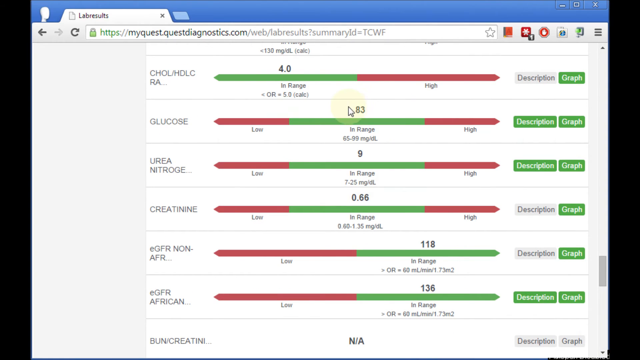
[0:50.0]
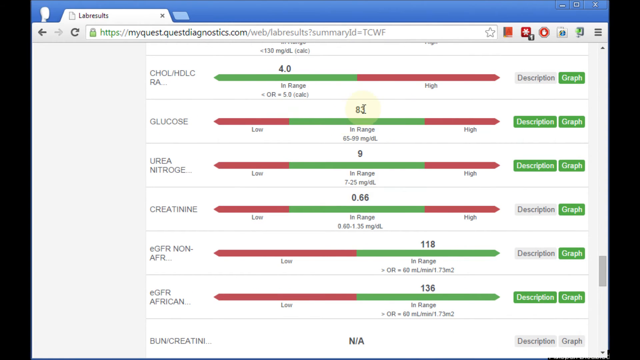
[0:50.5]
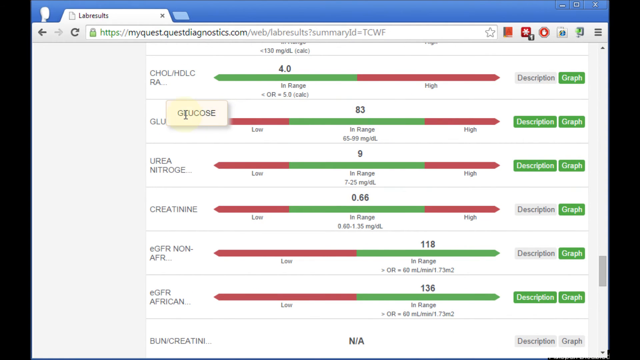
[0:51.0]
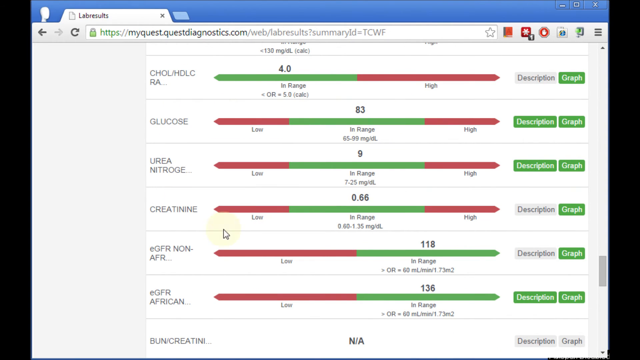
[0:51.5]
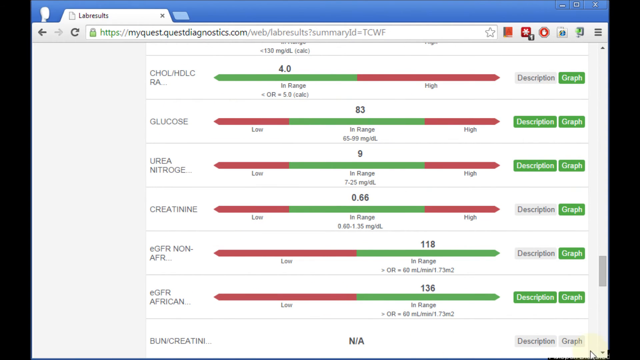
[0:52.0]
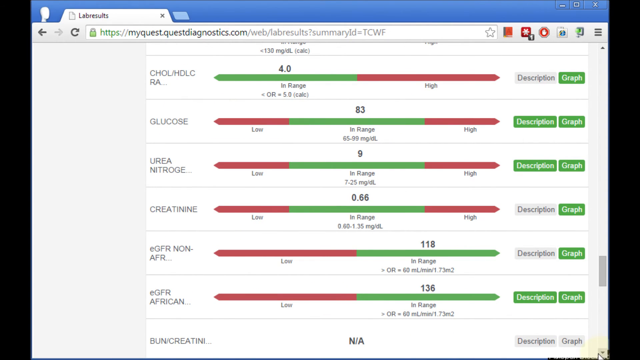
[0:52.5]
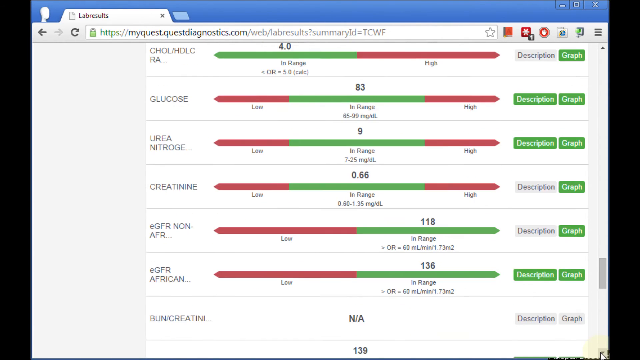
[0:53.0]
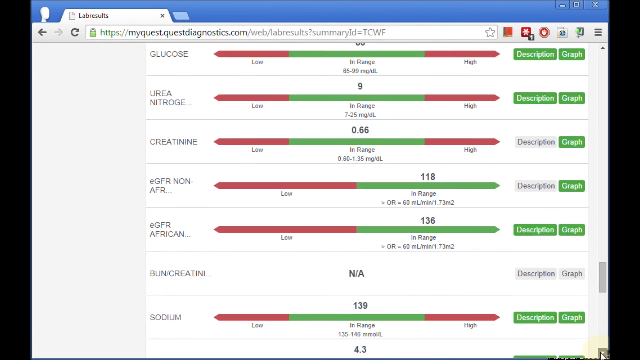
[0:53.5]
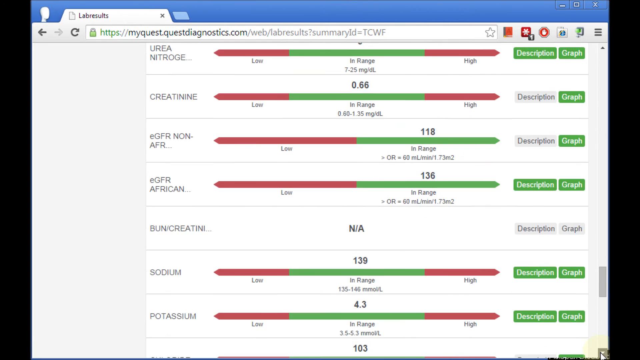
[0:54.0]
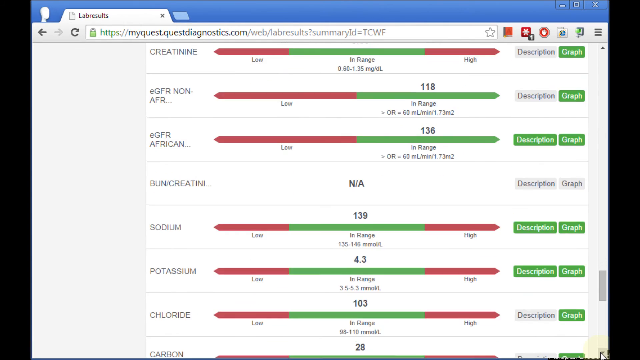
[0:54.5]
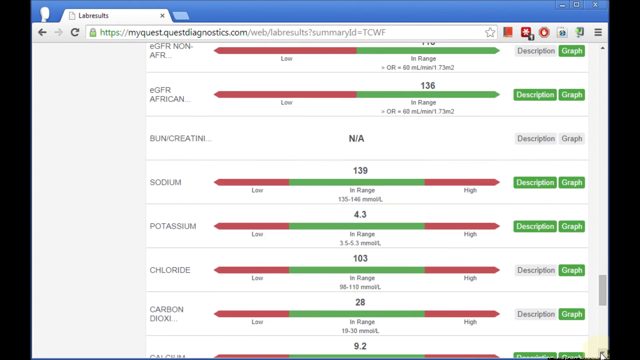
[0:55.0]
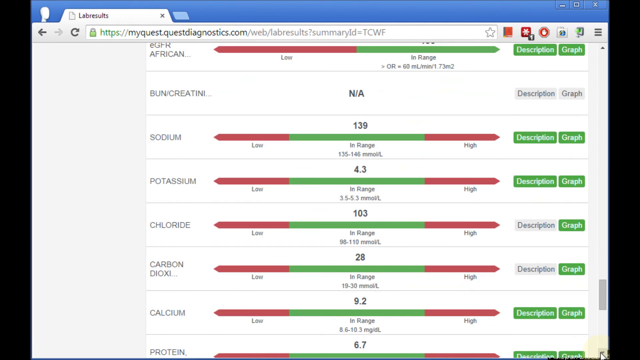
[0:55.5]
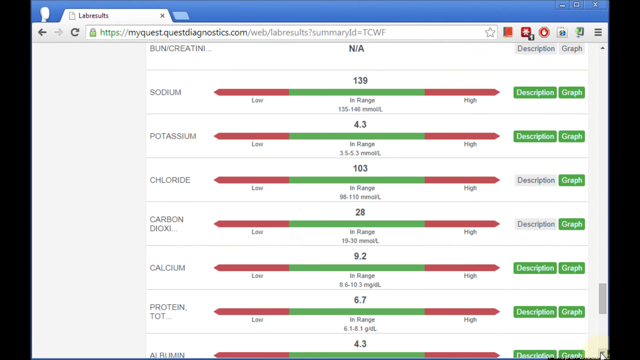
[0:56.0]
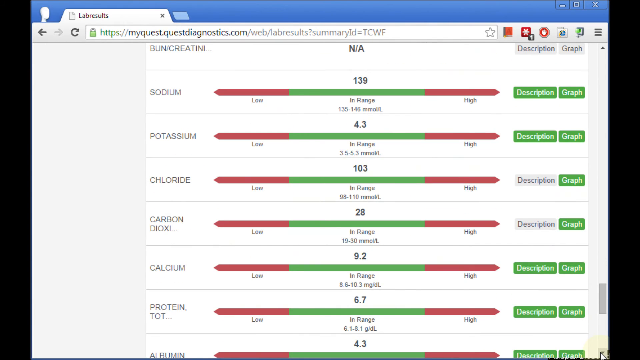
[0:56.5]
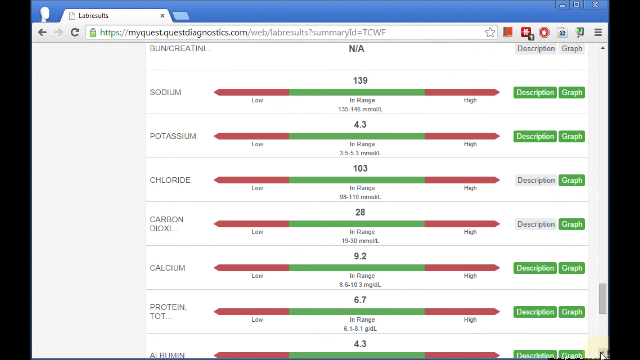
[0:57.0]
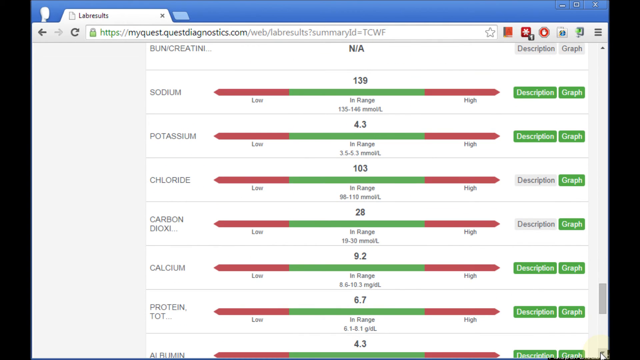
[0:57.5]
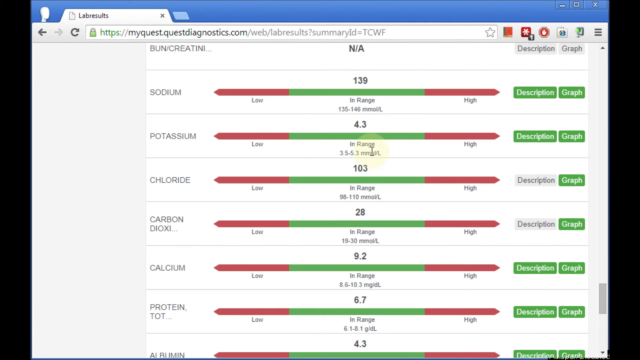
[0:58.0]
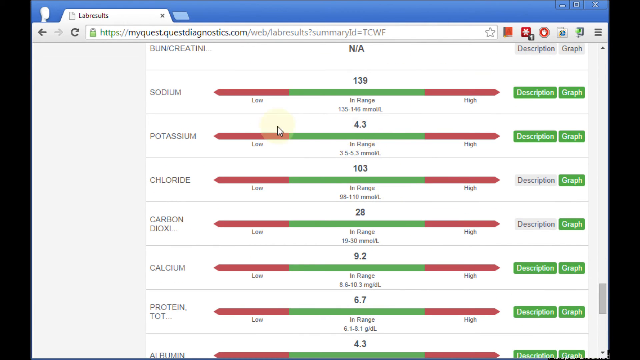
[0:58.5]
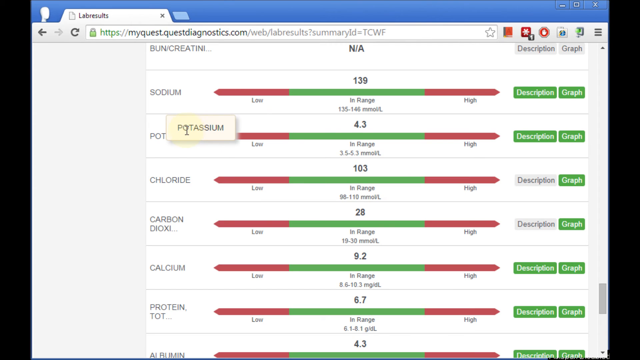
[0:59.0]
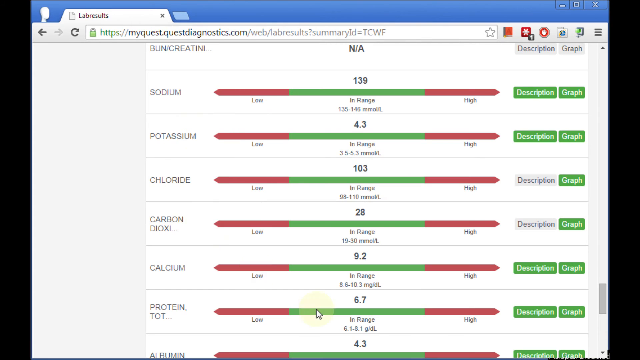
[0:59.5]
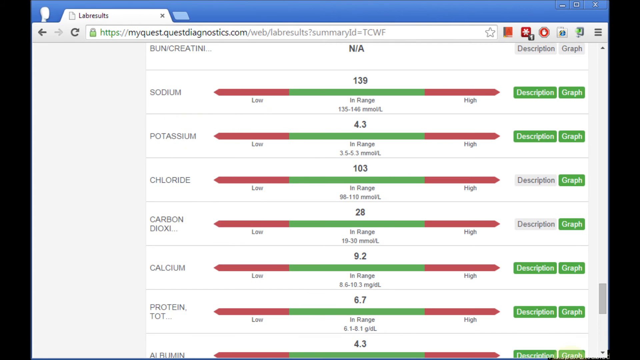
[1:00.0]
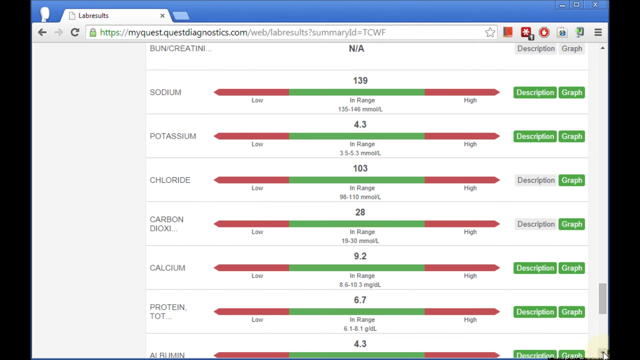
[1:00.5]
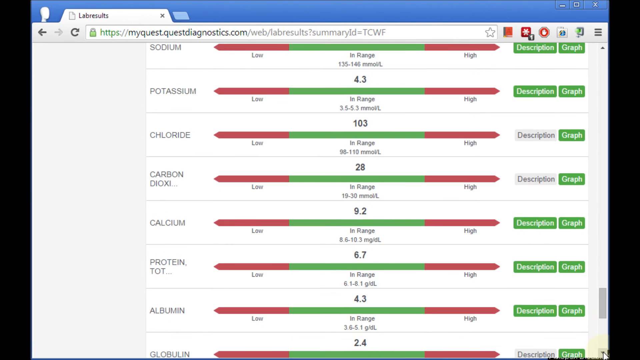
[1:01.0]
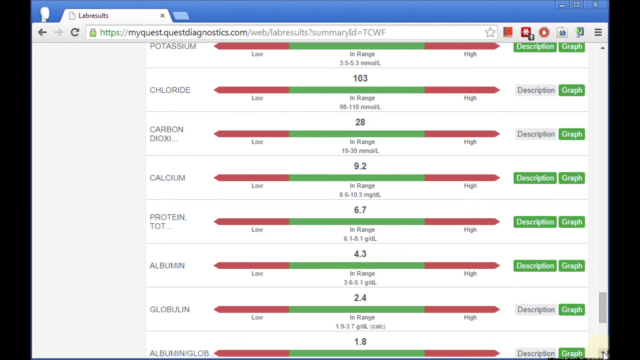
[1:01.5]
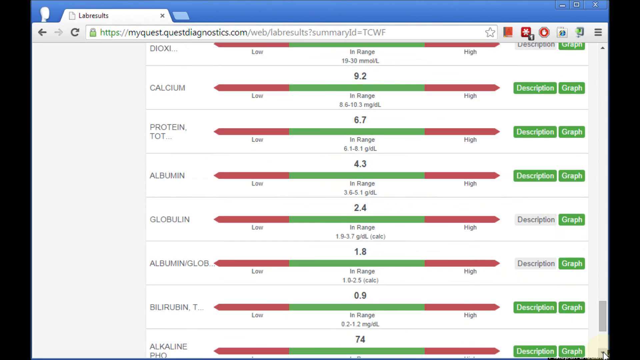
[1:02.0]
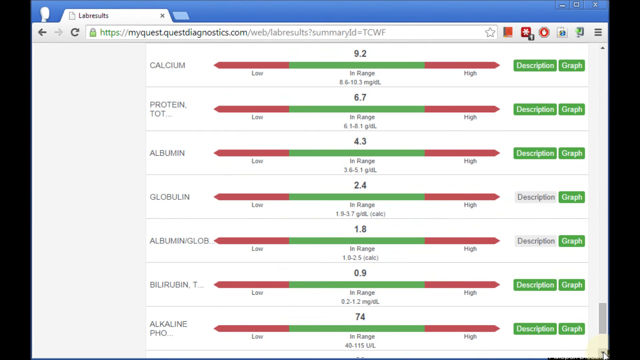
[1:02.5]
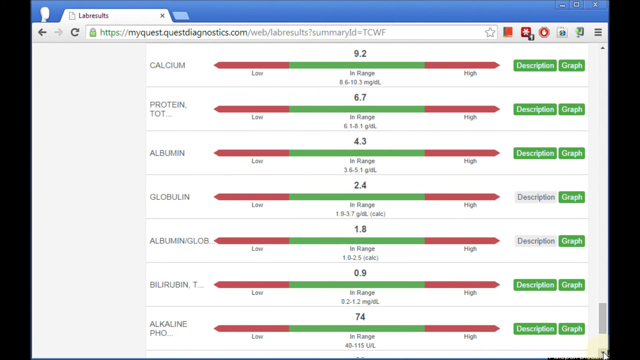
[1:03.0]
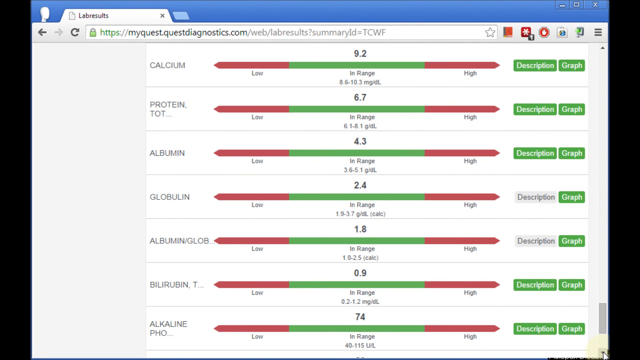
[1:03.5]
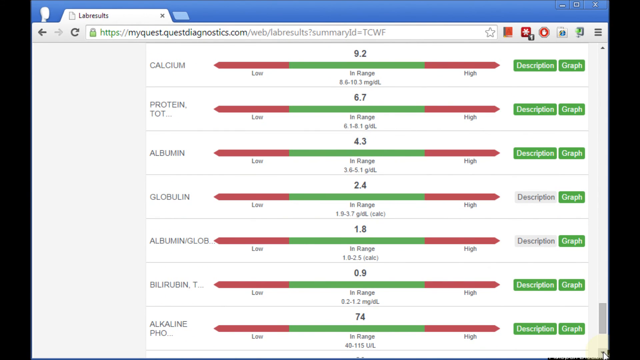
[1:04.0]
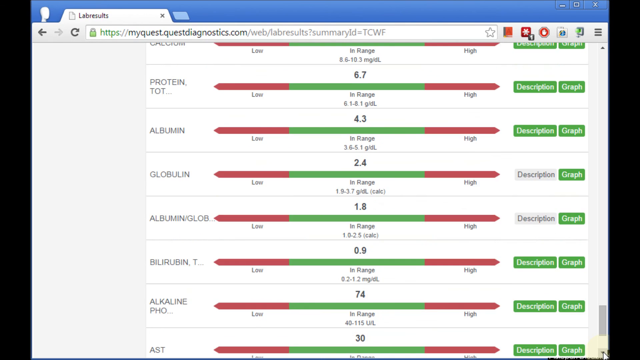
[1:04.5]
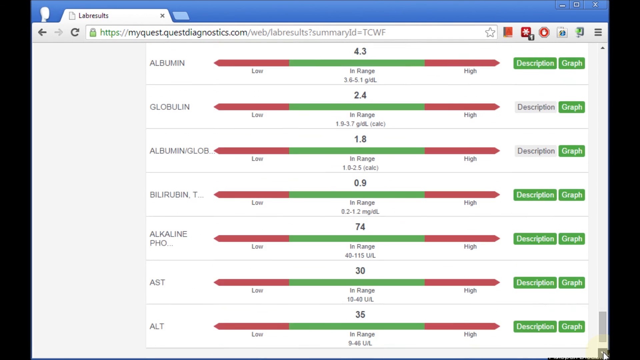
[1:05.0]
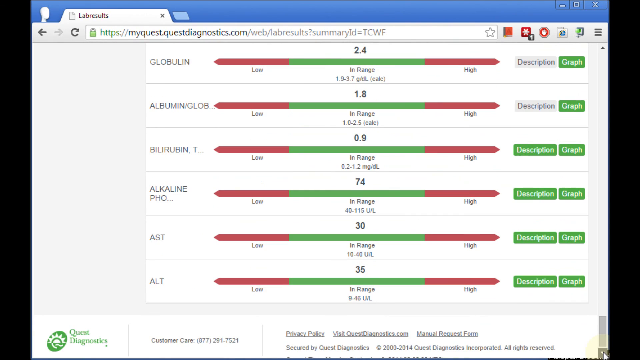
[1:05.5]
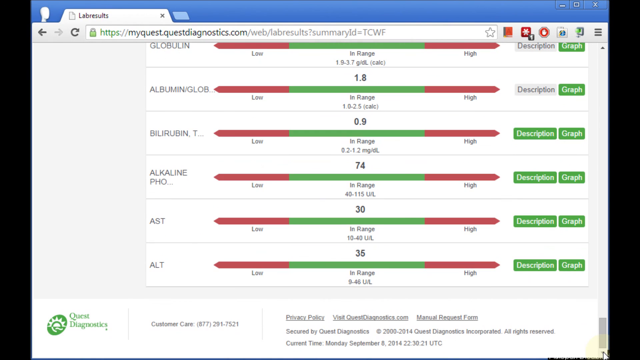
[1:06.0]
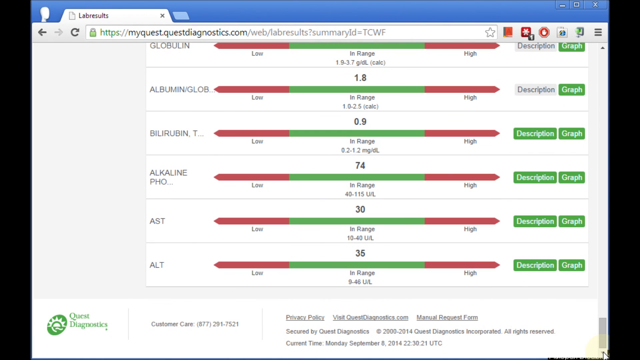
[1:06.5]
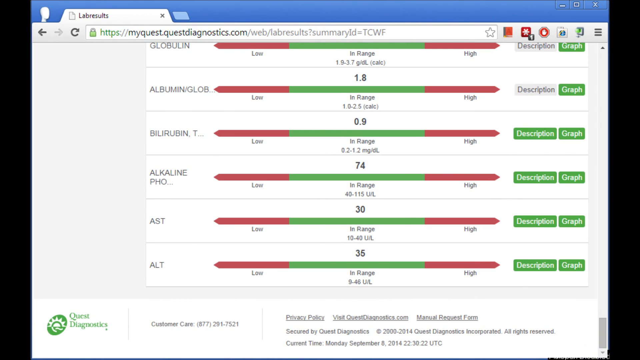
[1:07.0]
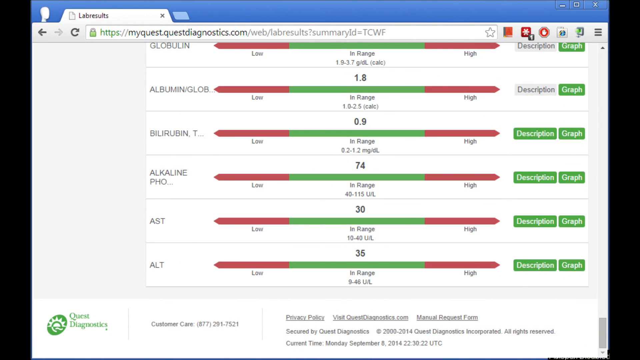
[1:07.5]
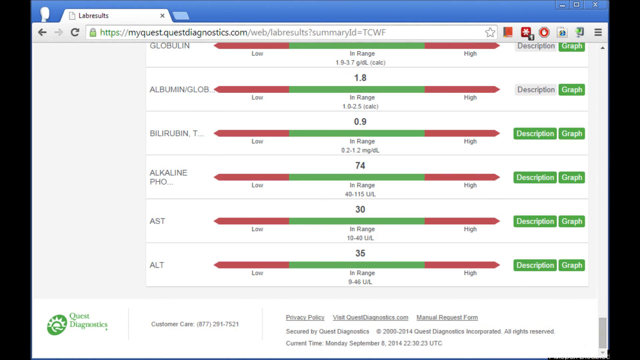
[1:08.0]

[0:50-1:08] The person is still on the Quest diagnostic page, looking at lab results for blood work. The results are displayed in two ways: a line divided into three parts, with low and high sections in red and the middle section indicating a good result, and another line that is half green and half red. For example, her glucose score is 83, with the in-range values shown as 65 through 99 and a unit beginning with "MG". Each result shows what the normal range is, and for high scores, what the range is for that. The person continues scrolling through the results and is almost at the bottom of the page. Hovering over items shows potassium, chlorine, and chloride. At the bottom of the page, the very last result is ALT.